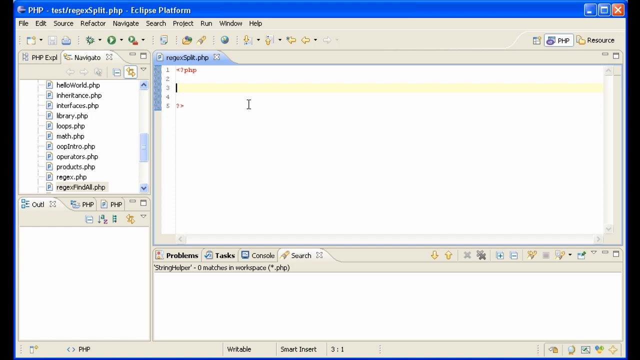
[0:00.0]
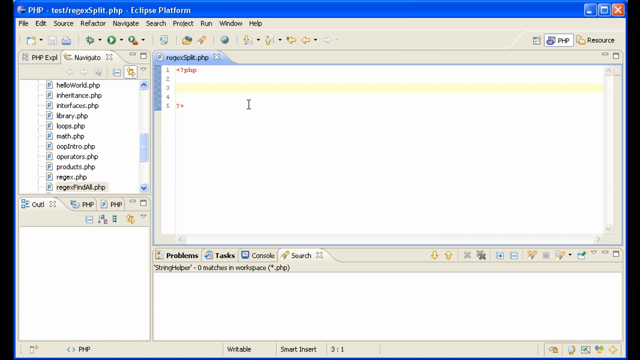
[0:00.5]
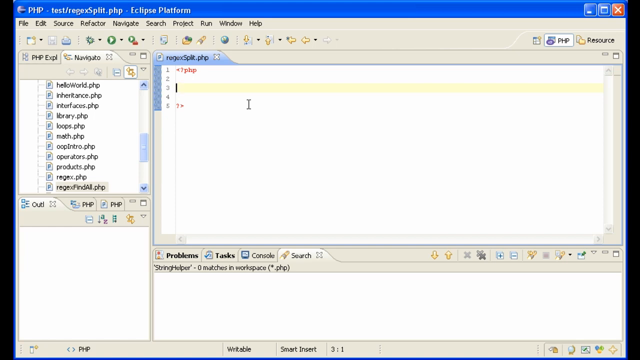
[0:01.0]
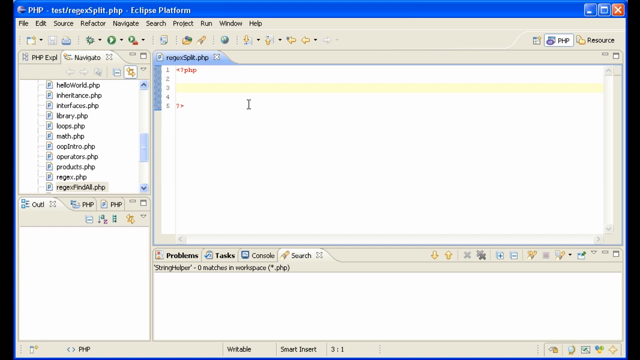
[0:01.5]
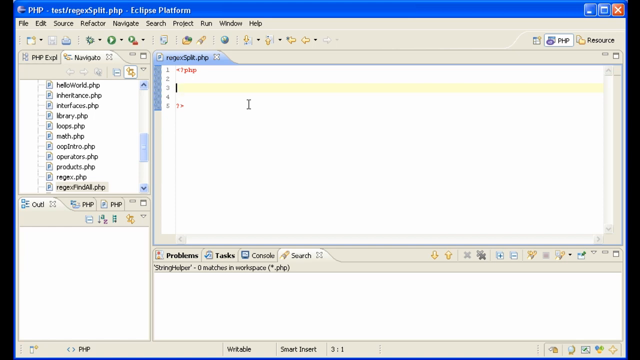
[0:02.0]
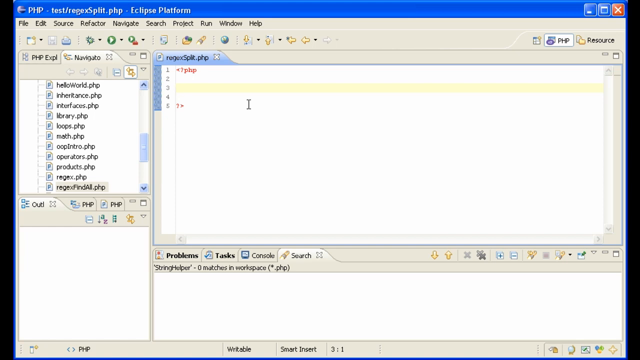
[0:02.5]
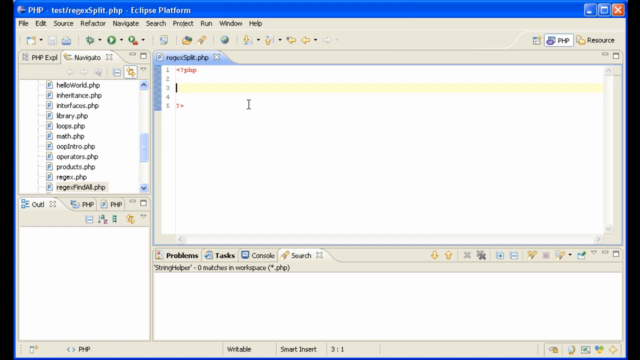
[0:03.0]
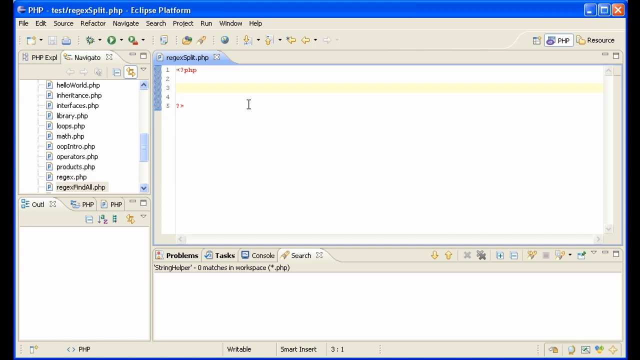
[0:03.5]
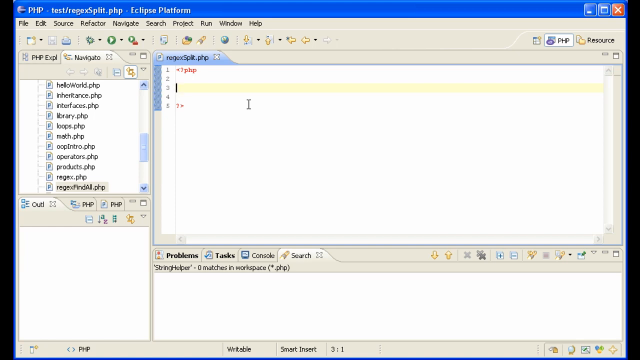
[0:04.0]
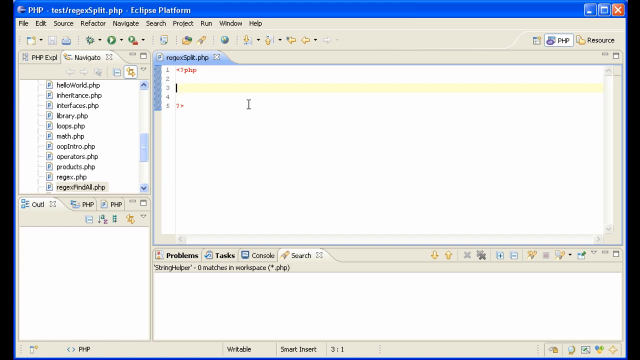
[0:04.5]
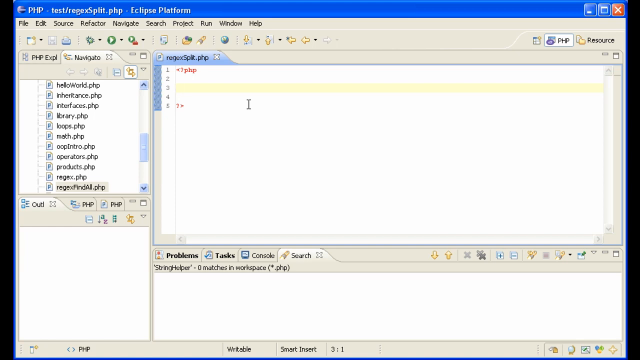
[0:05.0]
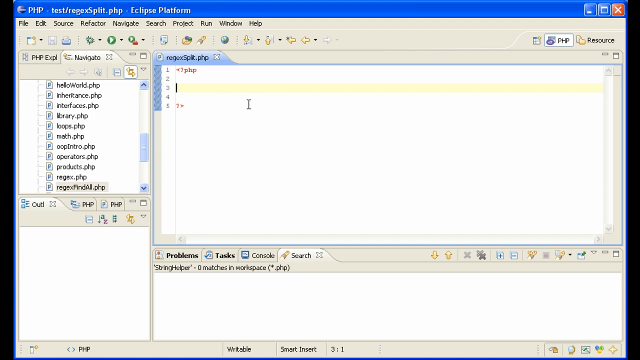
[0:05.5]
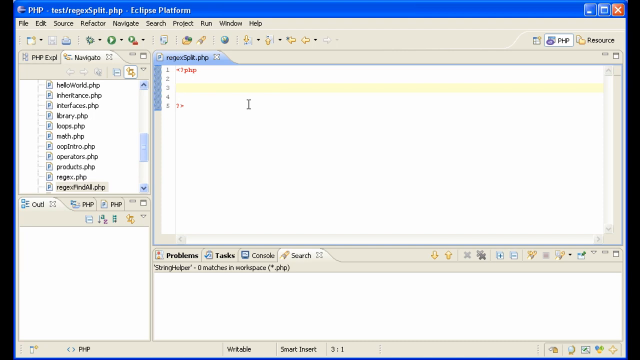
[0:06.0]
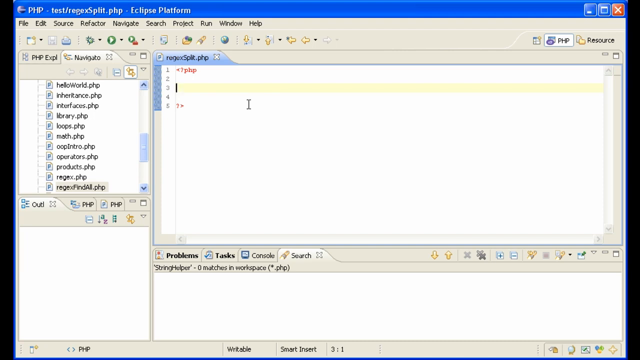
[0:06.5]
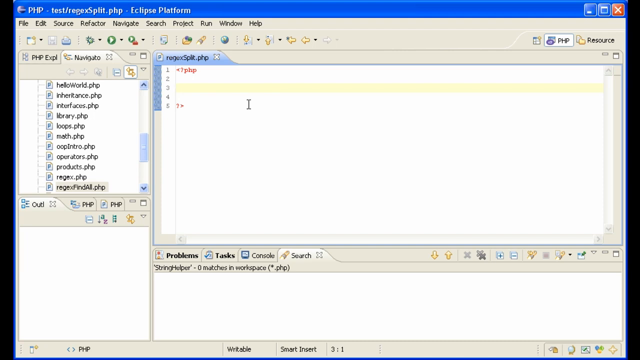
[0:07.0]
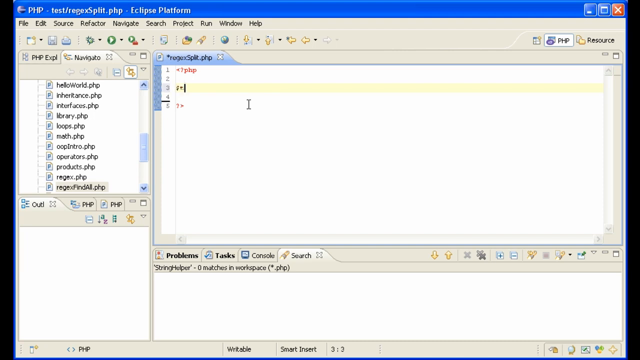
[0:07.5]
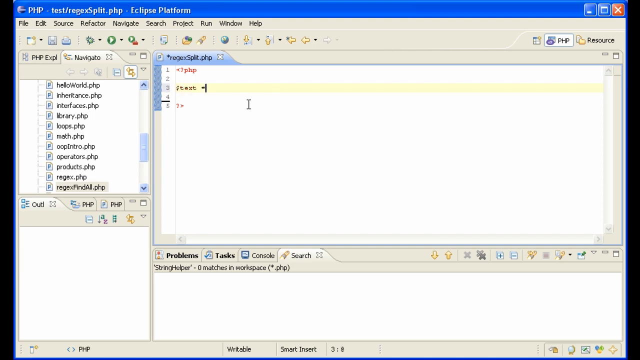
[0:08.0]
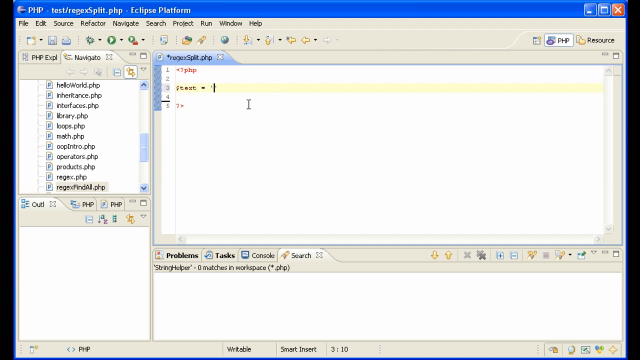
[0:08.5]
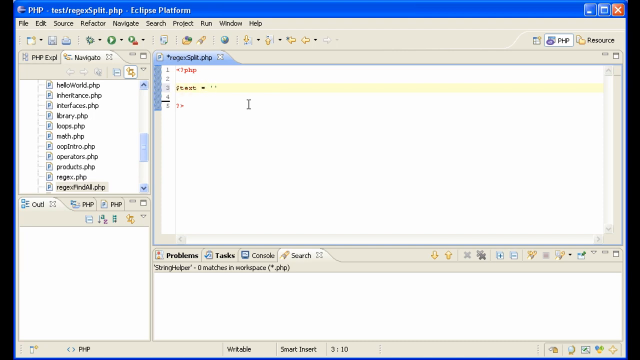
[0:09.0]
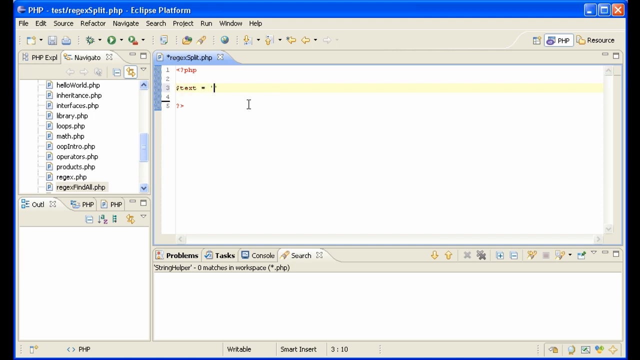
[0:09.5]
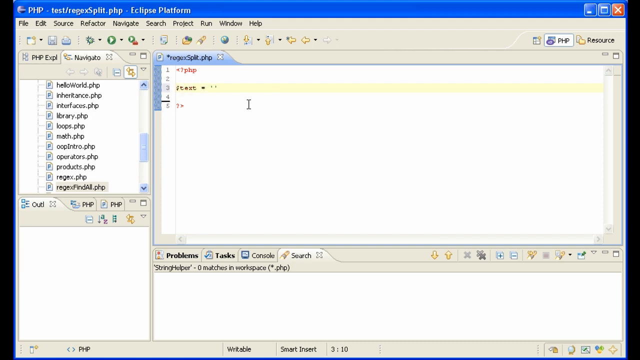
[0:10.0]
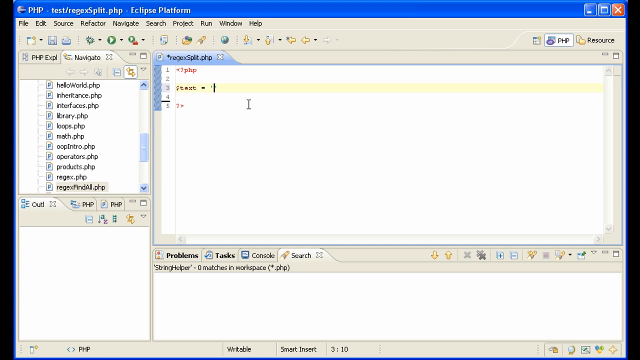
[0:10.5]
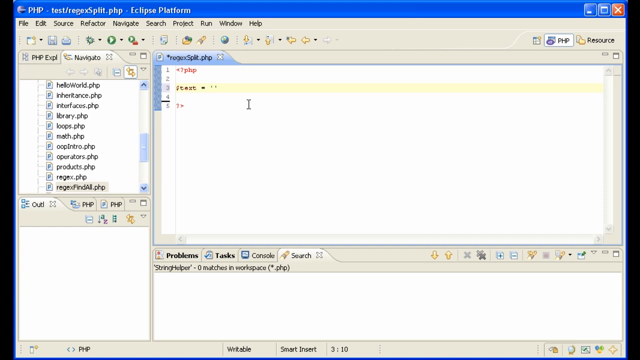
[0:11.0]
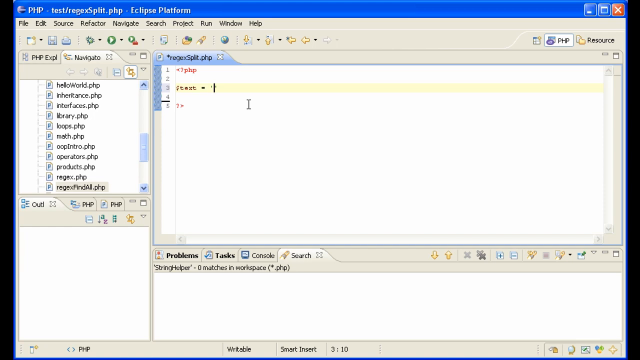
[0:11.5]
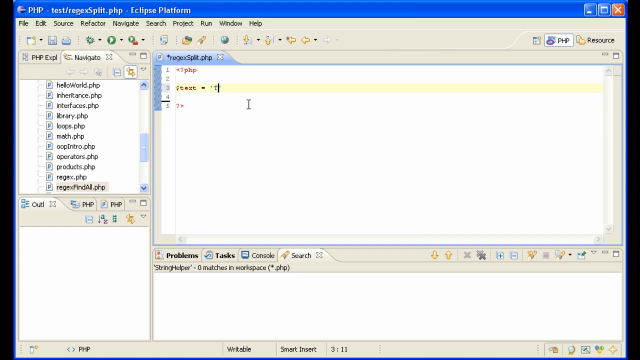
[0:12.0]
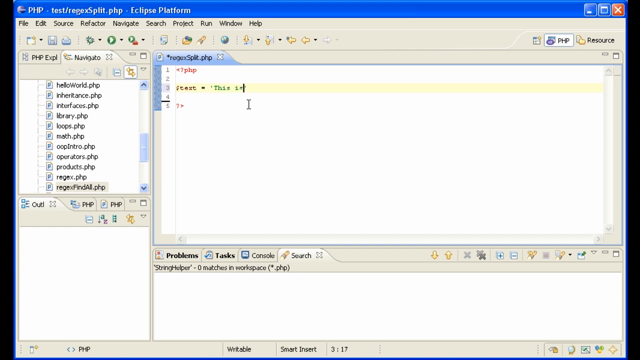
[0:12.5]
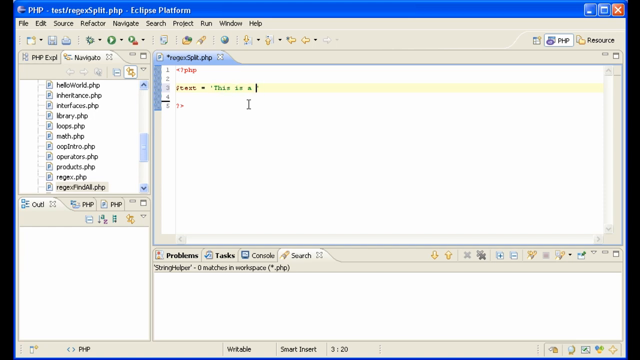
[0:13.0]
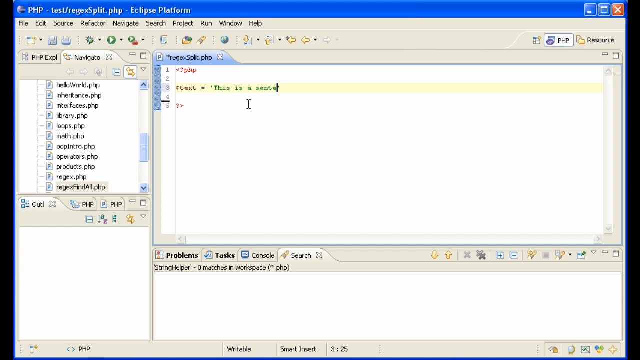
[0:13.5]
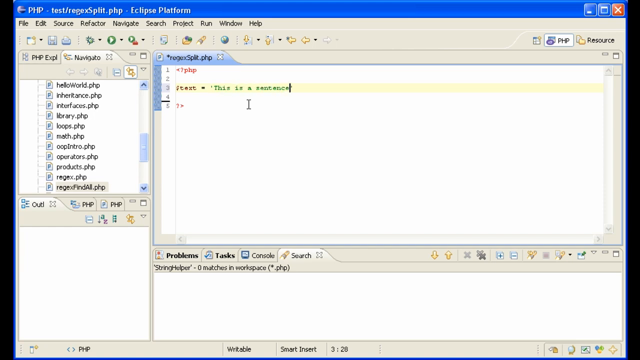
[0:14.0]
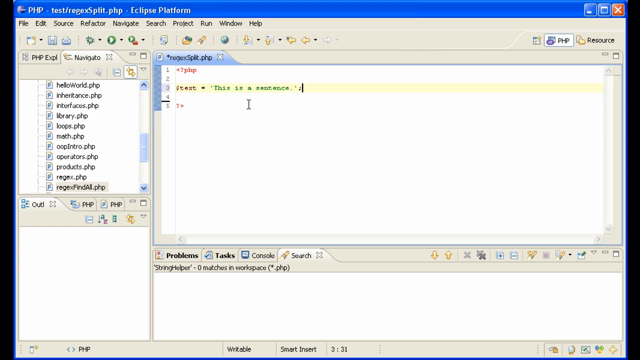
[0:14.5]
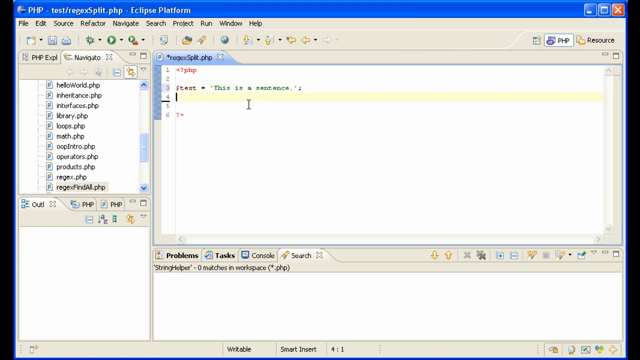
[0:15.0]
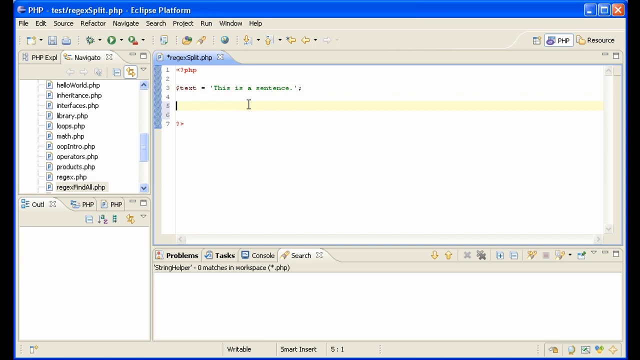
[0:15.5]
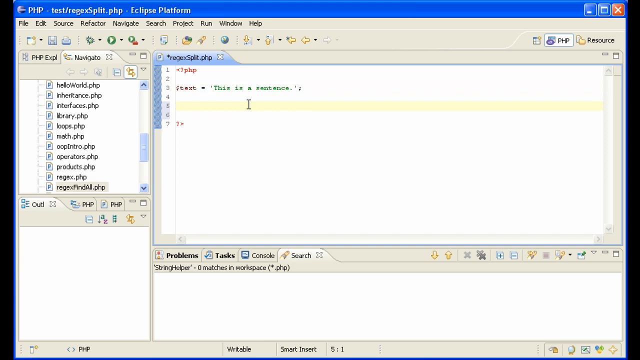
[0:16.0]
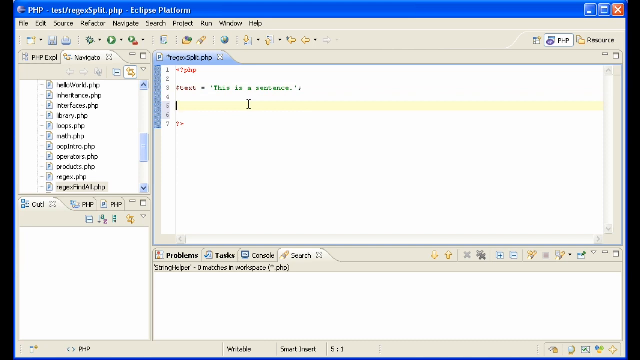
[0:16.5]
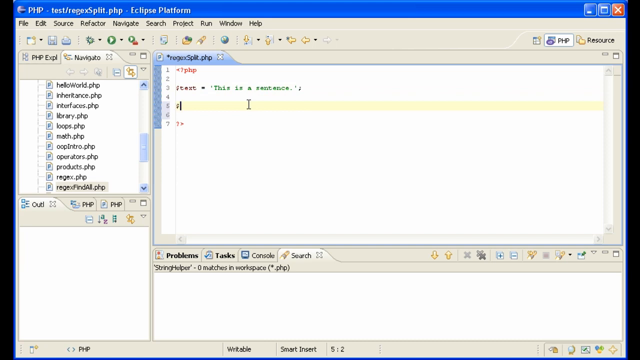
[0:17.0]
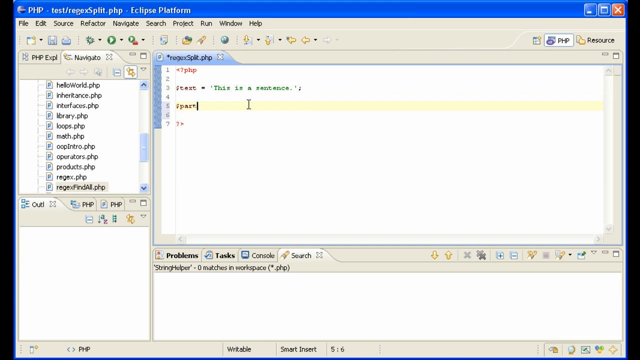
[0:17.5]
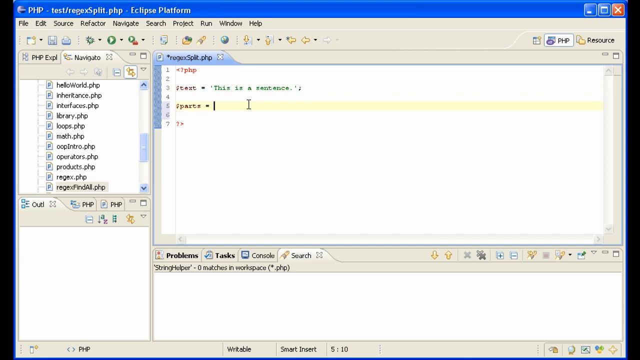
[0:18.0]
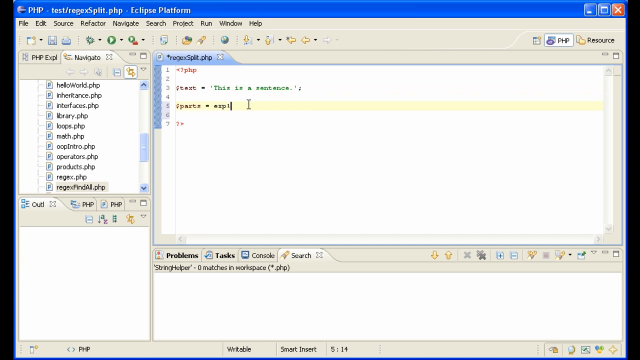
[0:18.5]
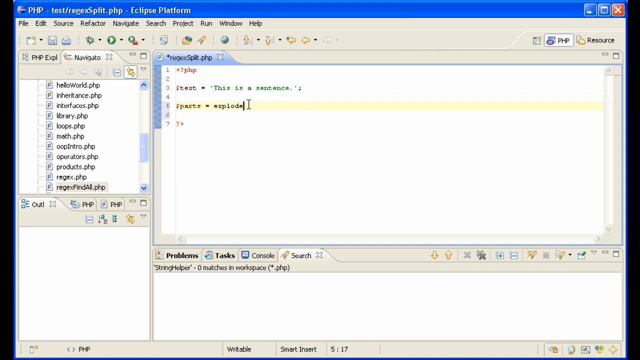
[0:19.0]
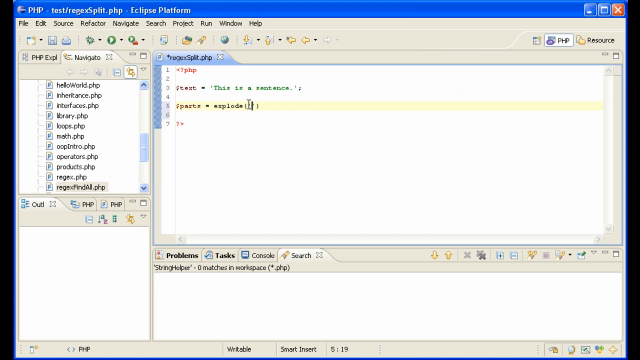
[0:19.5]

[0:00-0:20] Eclipse, an integrated development environment, is editing a PHP project, with the open file named "regex-split.php". The cursor blinks for a few seconds before code is typed: a sentence, "this is a sentence", and then "parts equals explode". Below the text editor, several windows are open at the bottom, labeled "problems", "tasks", "console" and "search". On the left are the PHP Explorer and the navigation, showing the project and its PHP files, such as Hello World, Inheritance, Interfaces, Library, Loops, Math, OOP, Intro, Operators, Products and RegEx. The system is running Windows XP. Judging by the files, this seems to be a tutorial on a specific topic in PHP.